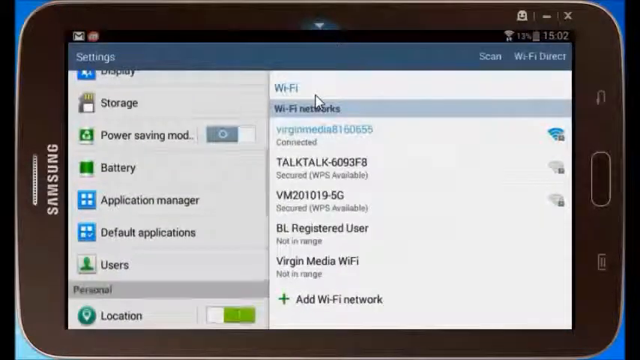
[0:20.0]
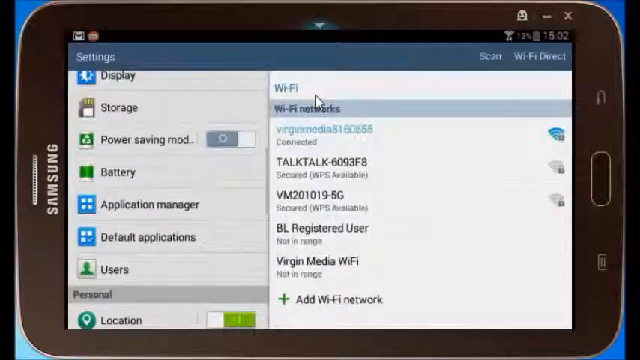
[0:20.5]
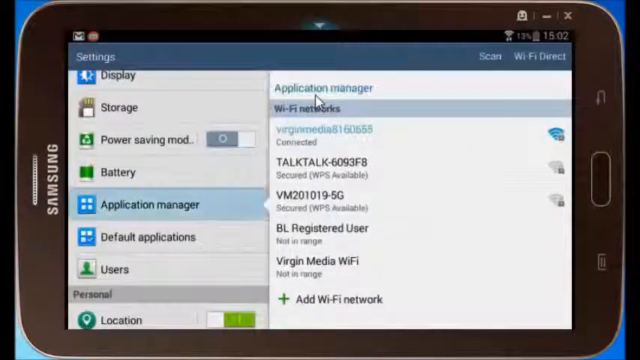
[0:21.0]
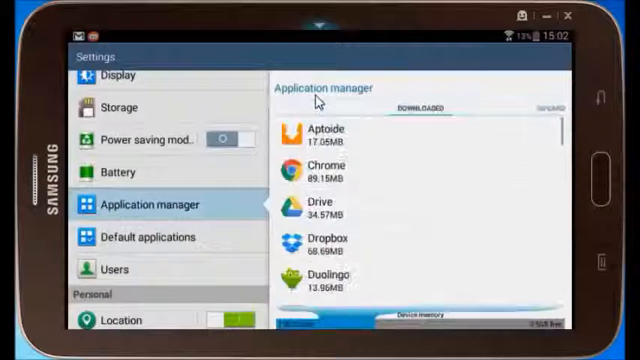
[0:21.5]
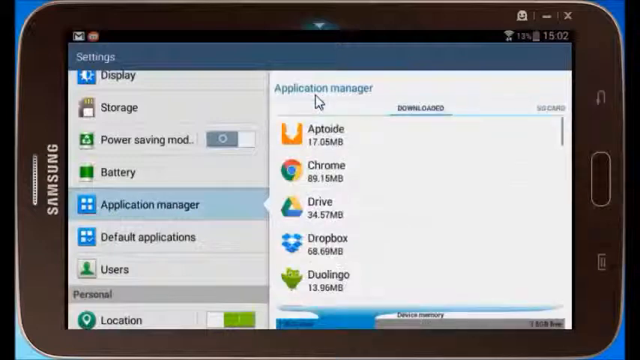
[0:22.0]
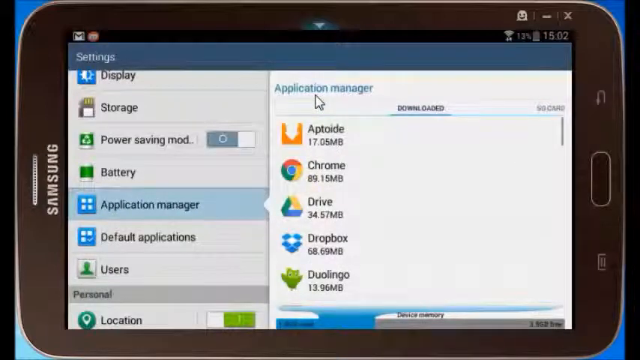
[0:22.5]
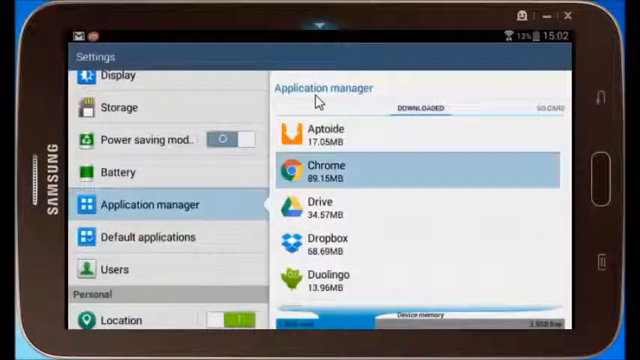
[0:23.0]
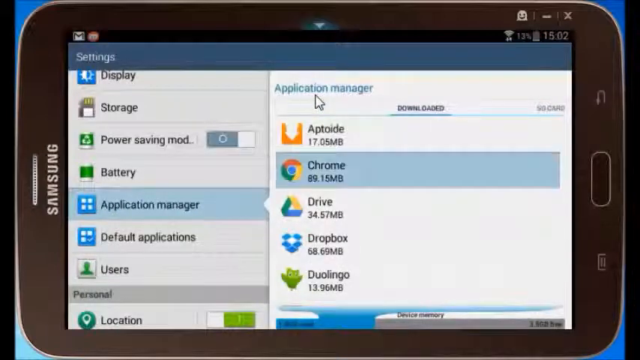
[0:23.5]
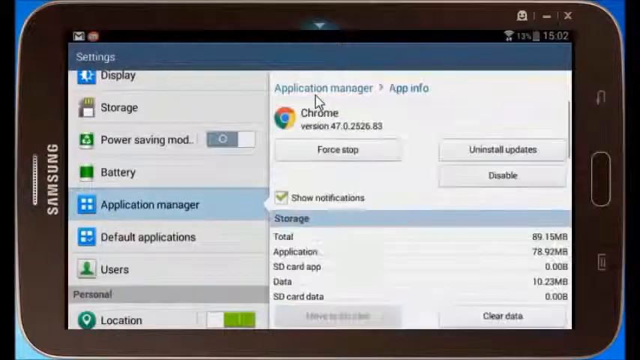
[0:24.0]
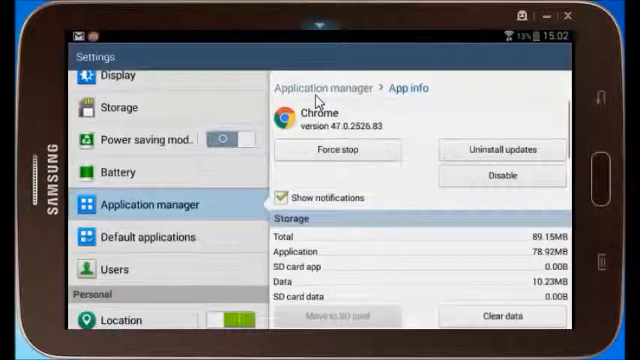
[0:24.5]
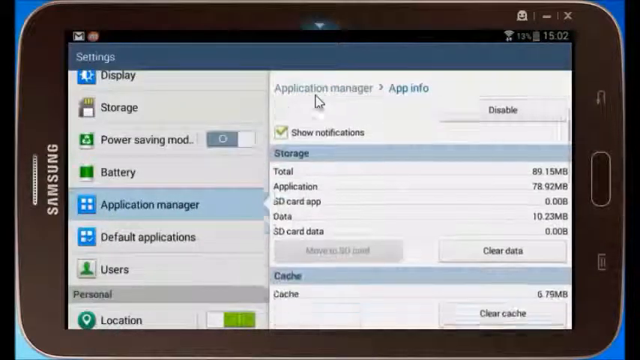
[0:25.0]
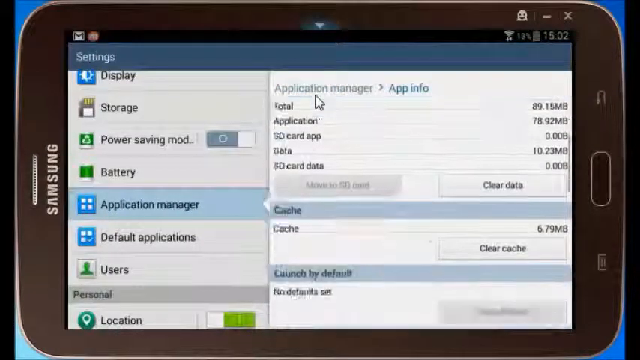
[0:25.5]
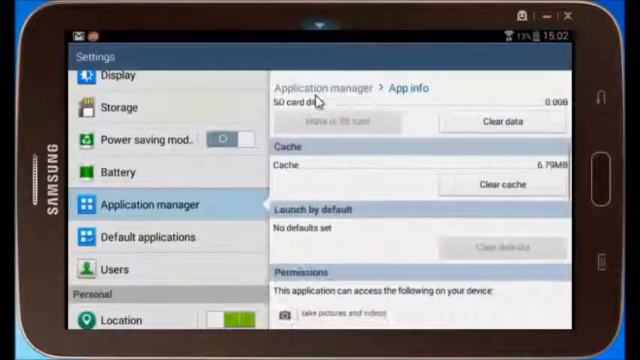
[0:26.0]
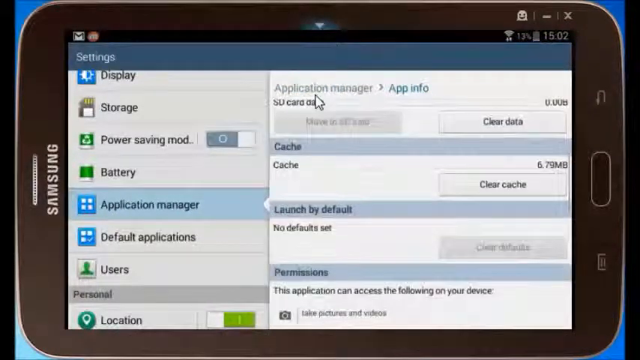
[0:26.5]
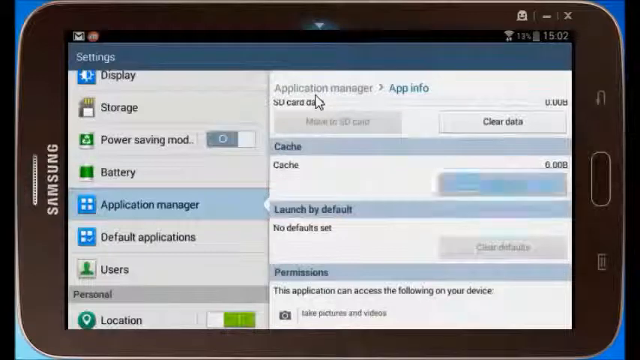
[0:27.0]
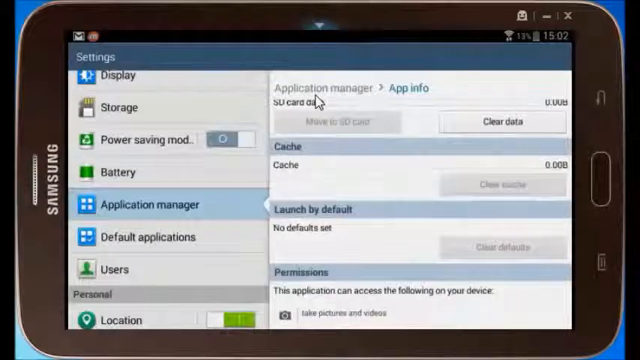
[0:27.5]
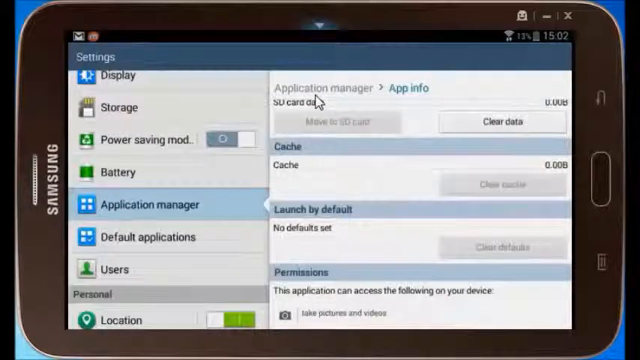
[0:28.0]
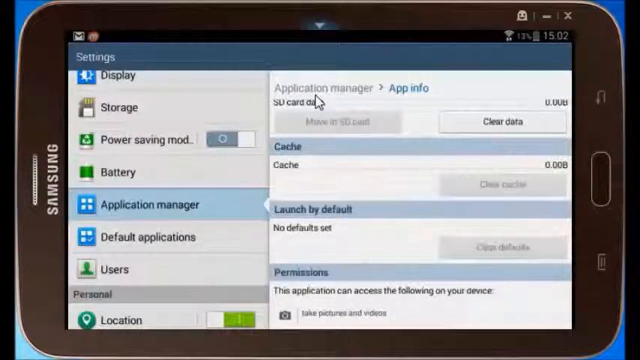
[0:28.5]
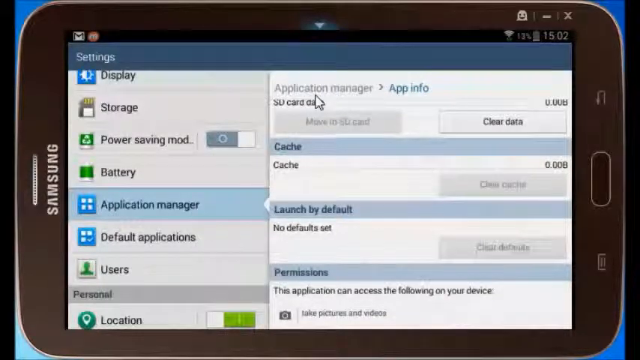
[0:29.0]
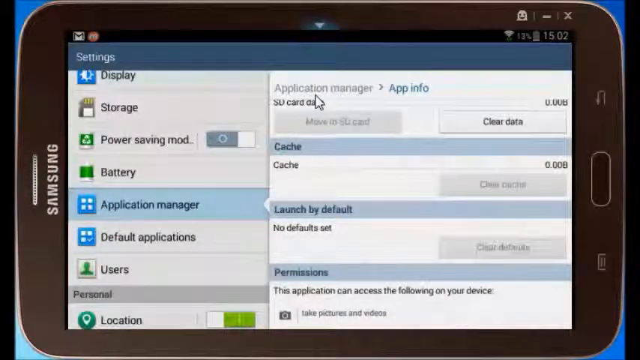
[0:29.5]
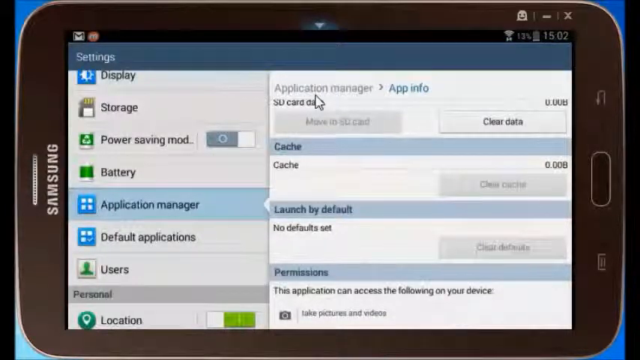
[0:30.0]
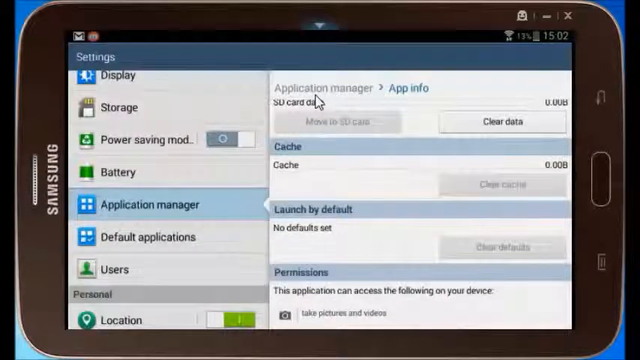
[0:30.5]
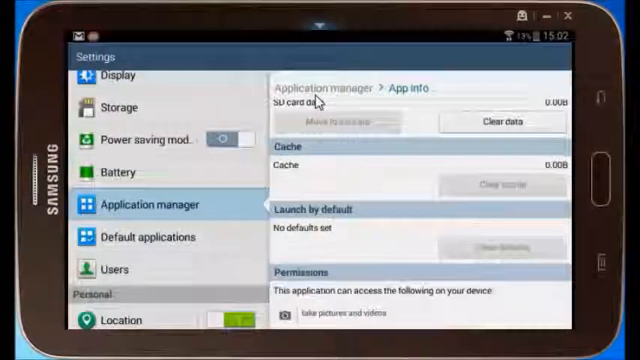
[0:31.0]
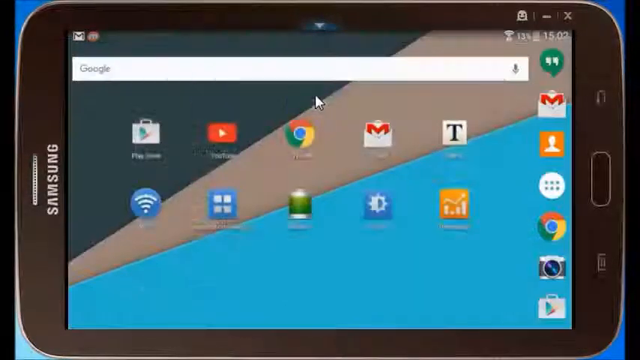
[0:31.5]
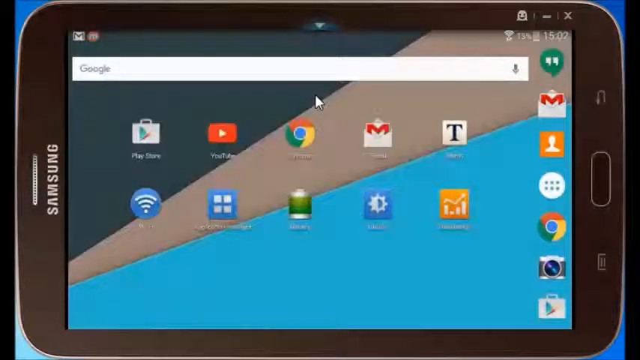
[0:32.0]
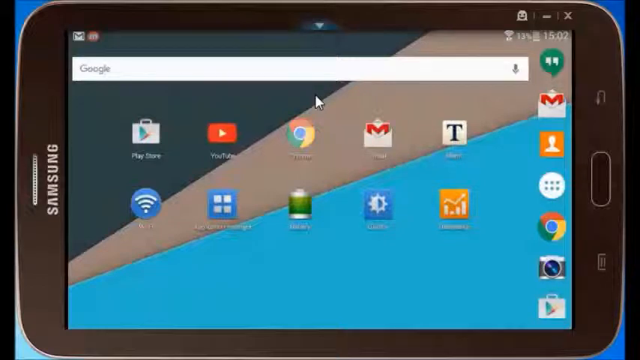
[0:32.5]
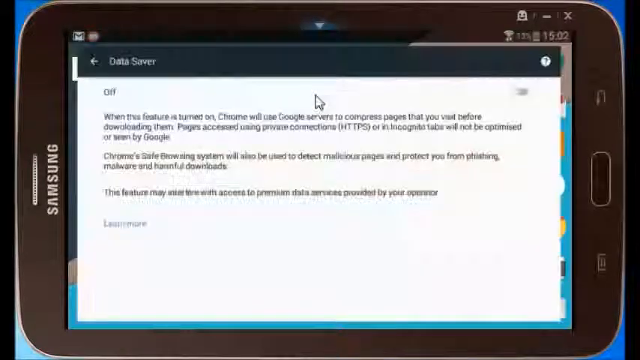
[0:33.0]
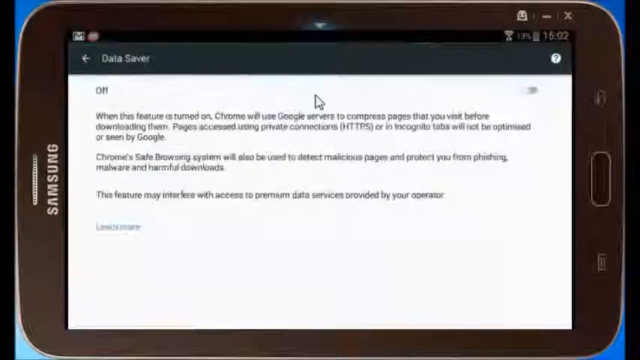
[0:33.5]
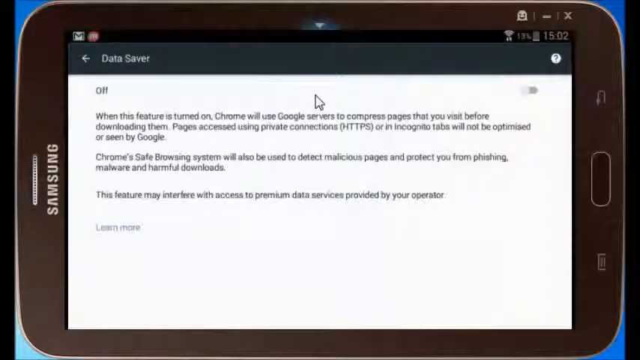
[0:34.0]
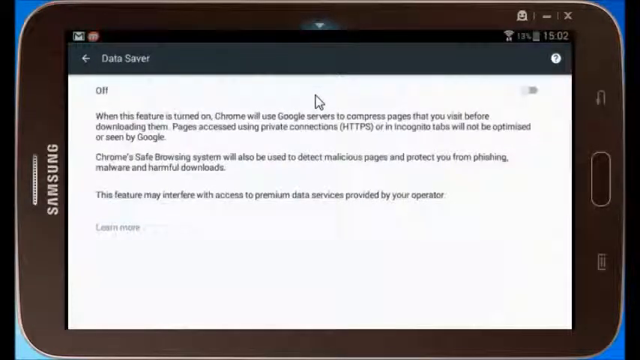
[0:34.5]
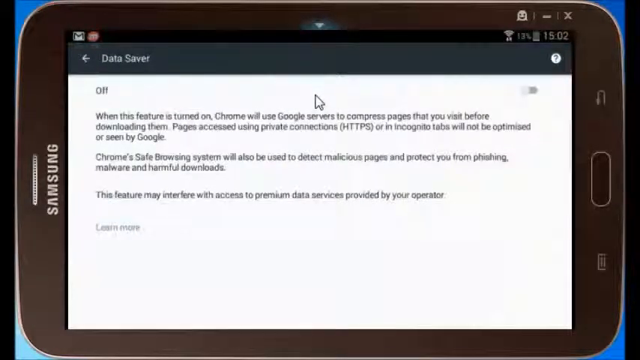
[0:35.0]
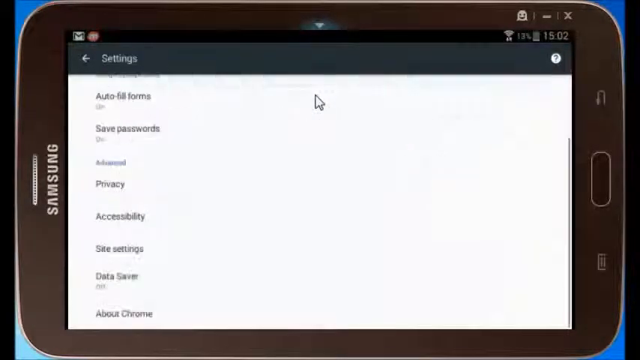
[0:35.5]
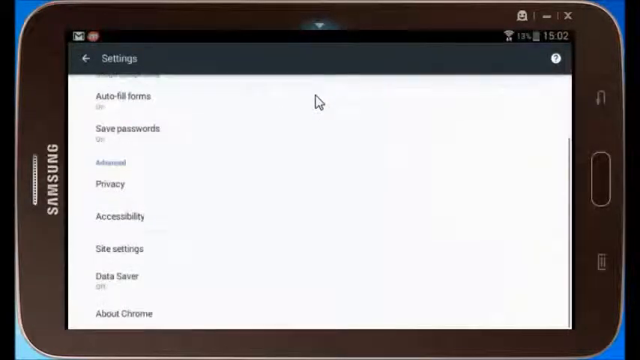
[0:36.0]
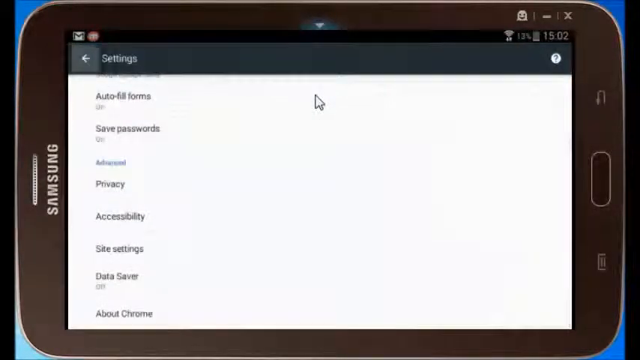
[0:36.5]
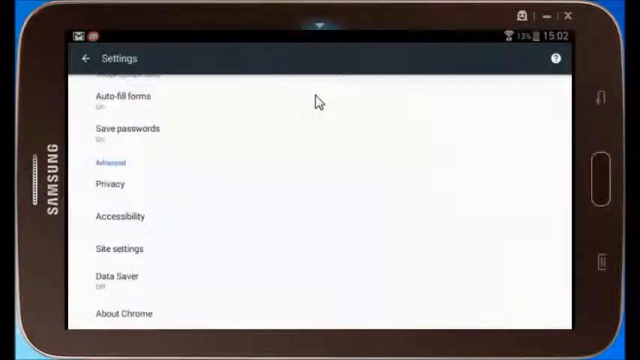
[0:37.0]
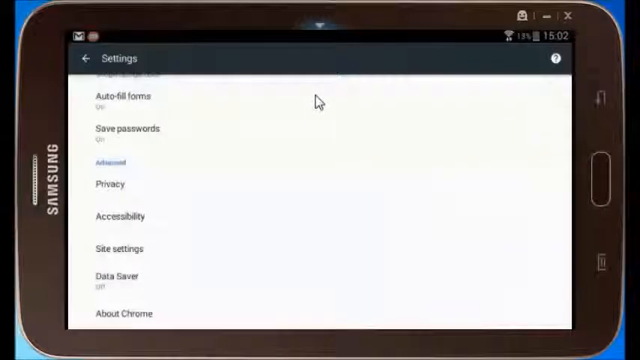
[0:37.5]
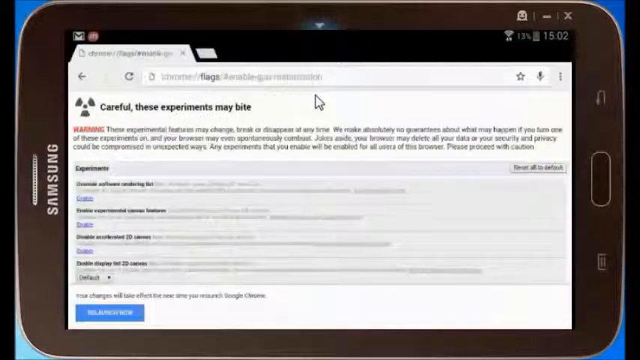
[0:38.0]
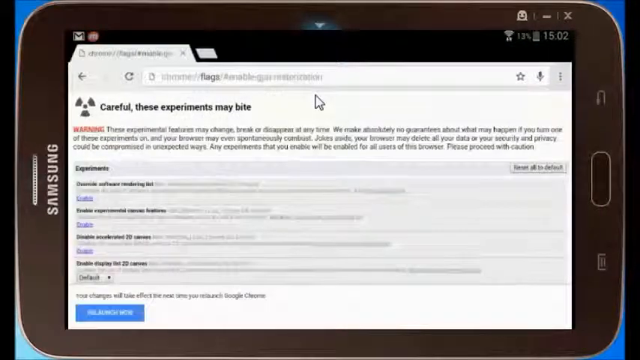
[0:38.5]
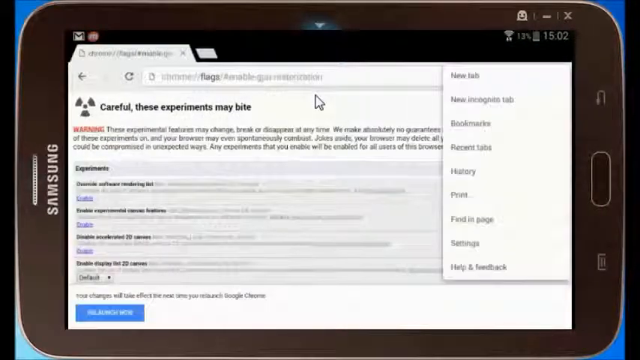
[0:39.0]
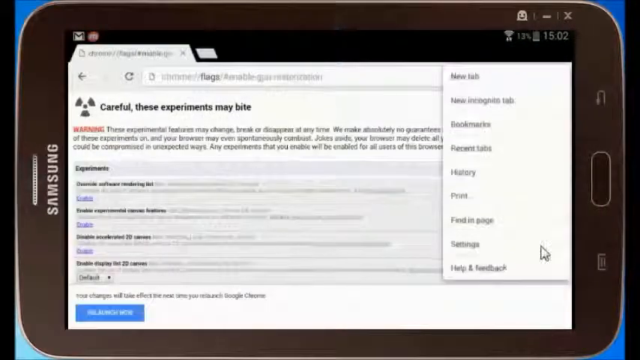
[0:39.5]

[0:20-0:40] The application manager is opened from the settings. Google Chrome is selected, then clear cache, and the cache is cleared, going from roughly 6.9 or 7.9 megabytes to zero. The application manager is exited, and the cursor opens Google Chrome. The data saver page is opened and the data saver is clicked off; it seems to be kept off. The Chrome settings are opened again, and a Chrome page appears that says "careful, these experiments may bite." A clock in the corner seems to show 3.02 in the afternoon, and the battery is at 13%, apparently running low.